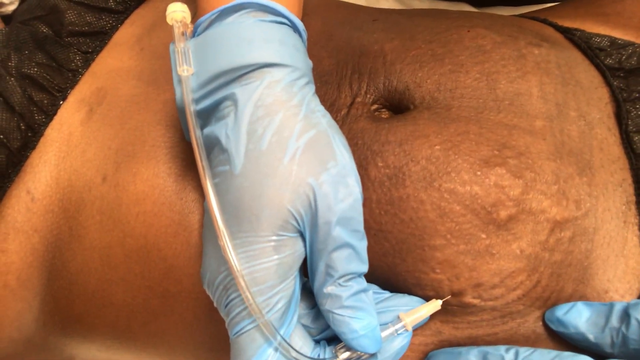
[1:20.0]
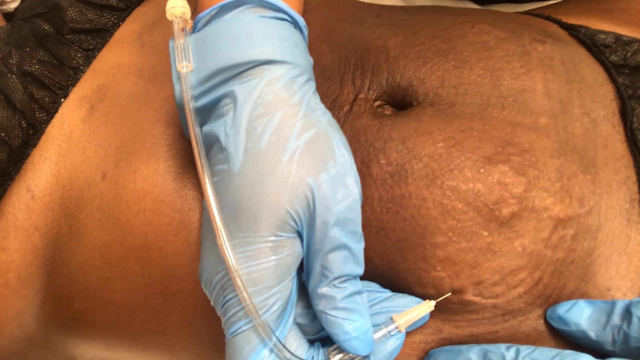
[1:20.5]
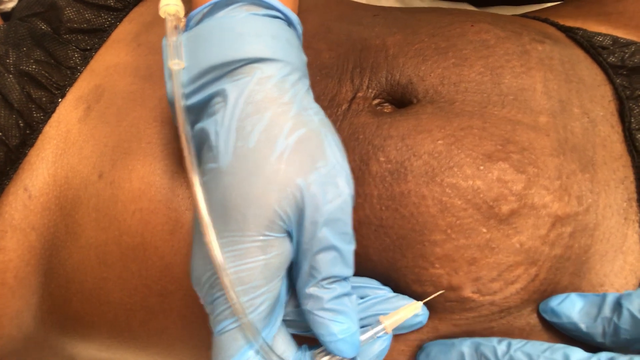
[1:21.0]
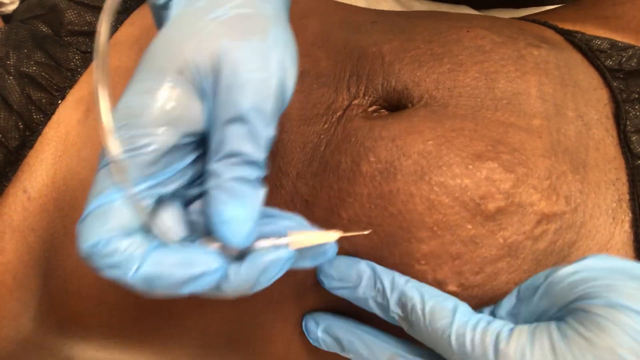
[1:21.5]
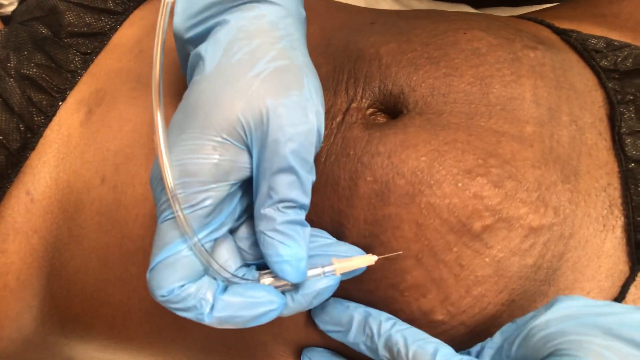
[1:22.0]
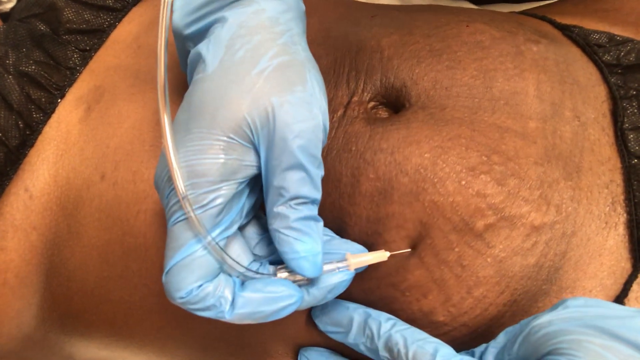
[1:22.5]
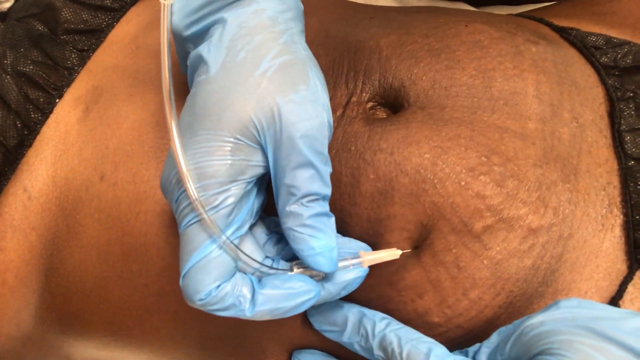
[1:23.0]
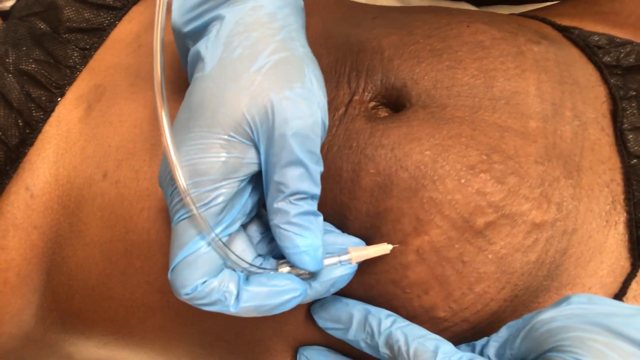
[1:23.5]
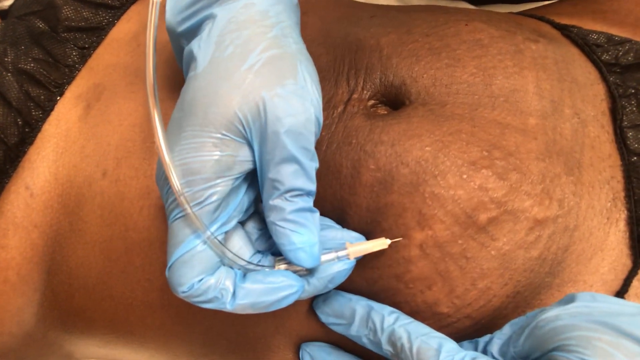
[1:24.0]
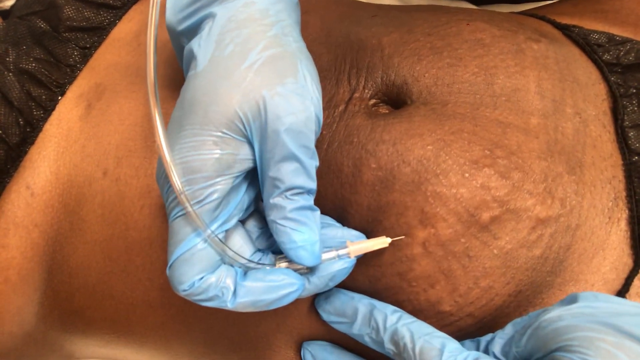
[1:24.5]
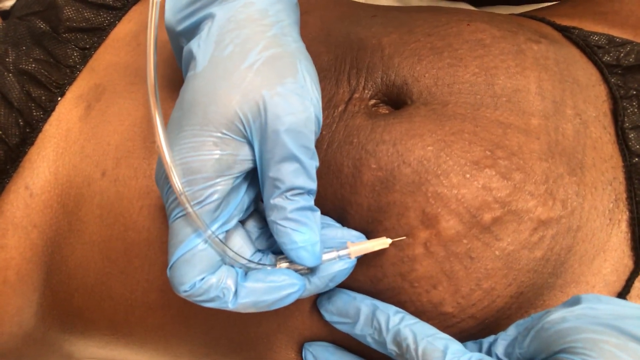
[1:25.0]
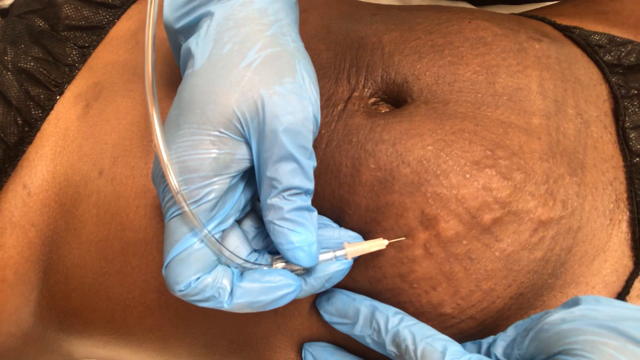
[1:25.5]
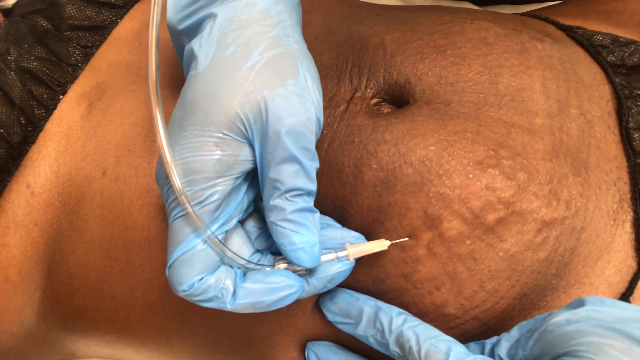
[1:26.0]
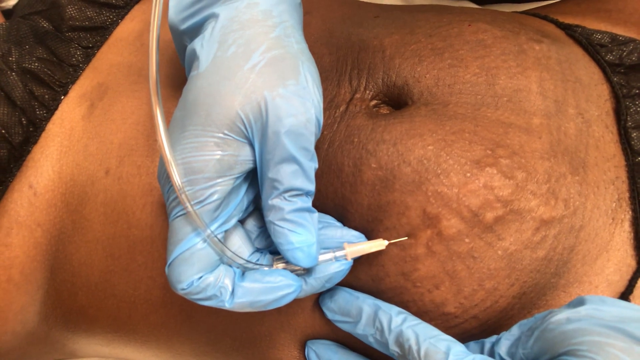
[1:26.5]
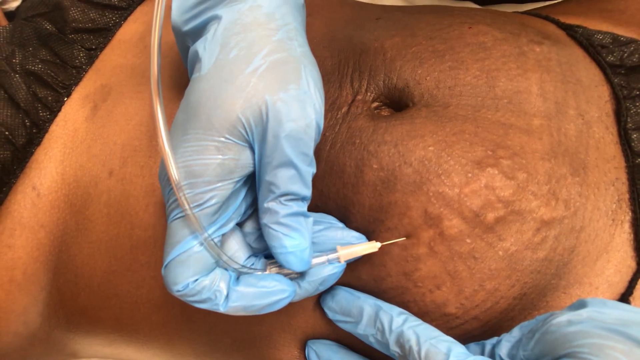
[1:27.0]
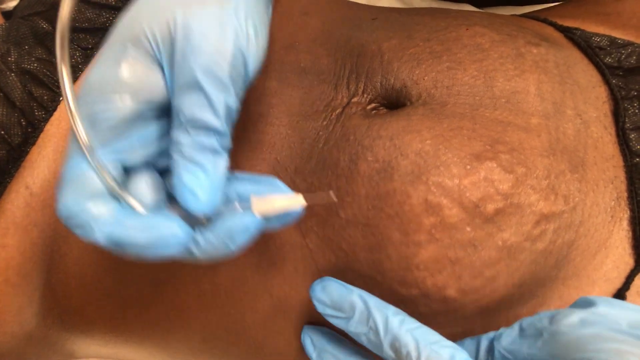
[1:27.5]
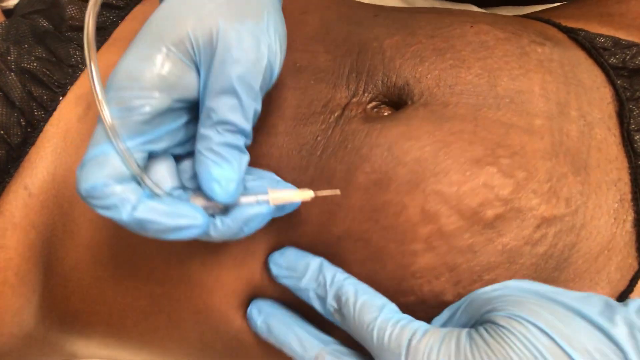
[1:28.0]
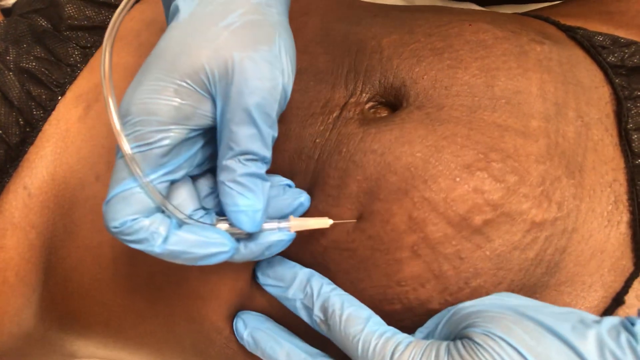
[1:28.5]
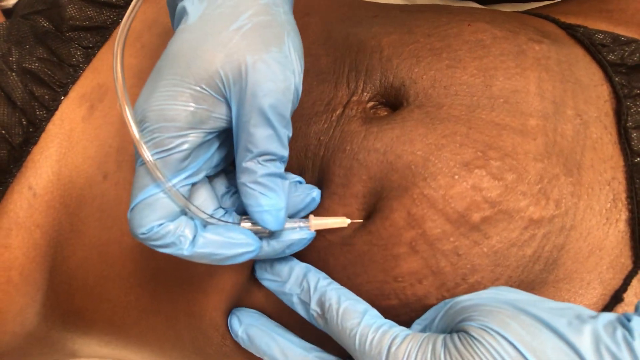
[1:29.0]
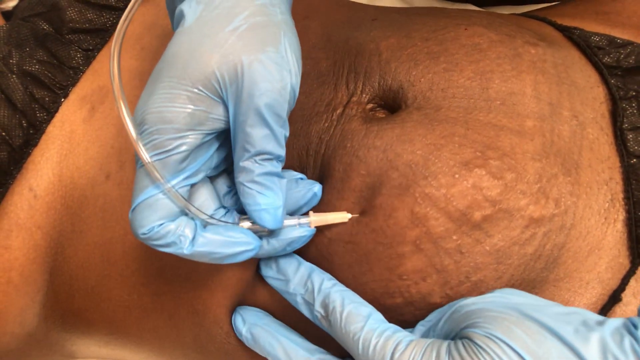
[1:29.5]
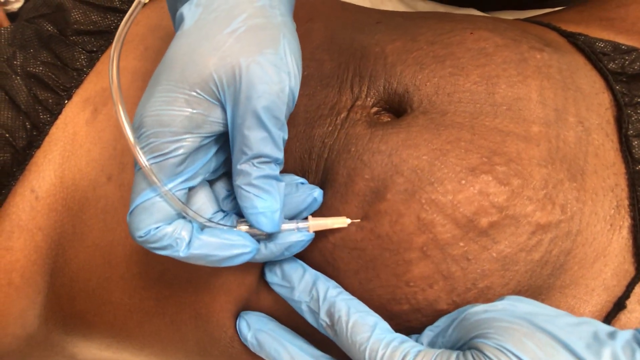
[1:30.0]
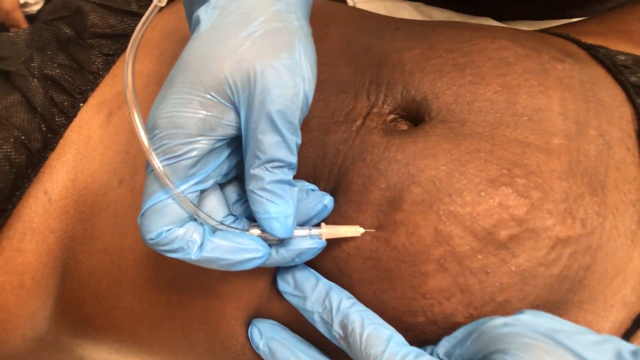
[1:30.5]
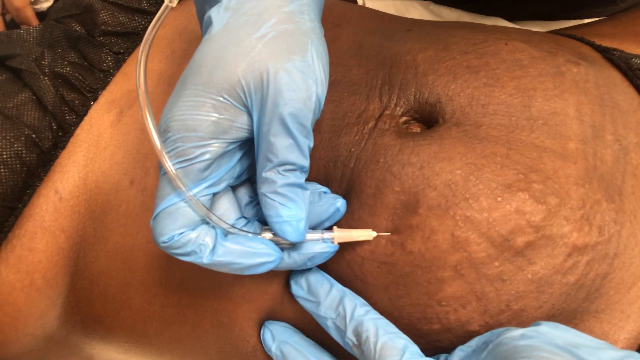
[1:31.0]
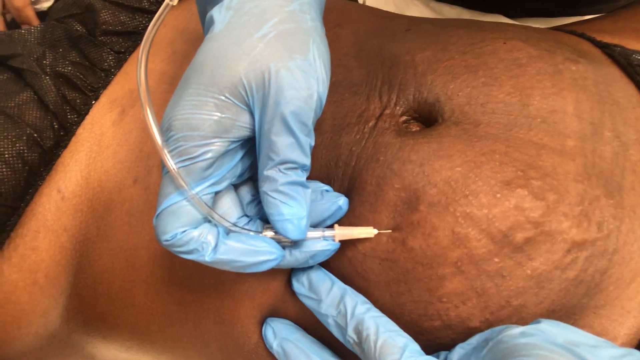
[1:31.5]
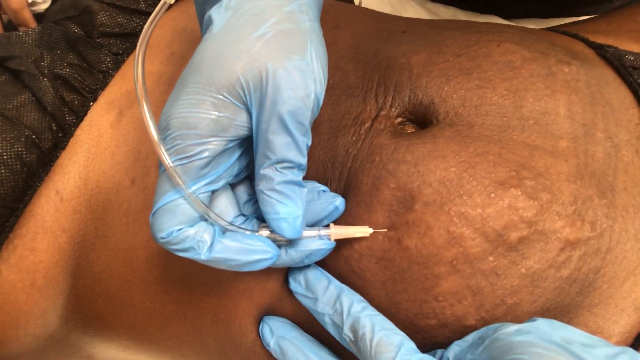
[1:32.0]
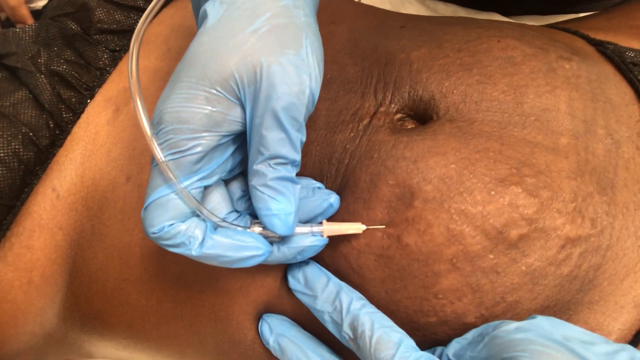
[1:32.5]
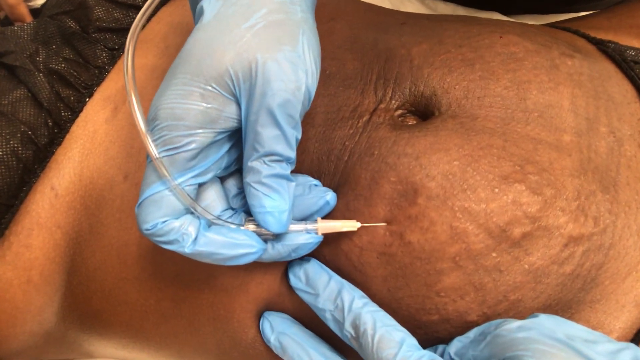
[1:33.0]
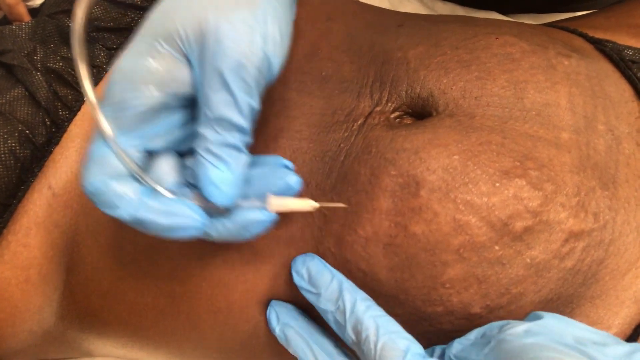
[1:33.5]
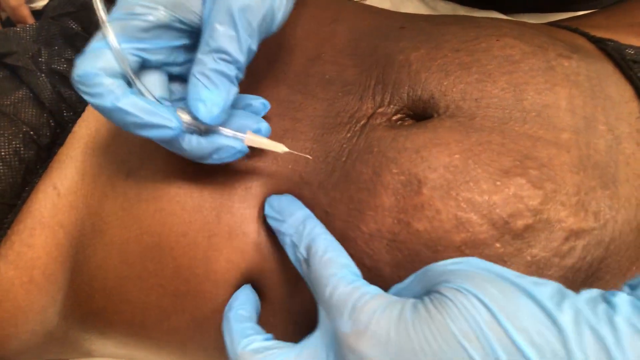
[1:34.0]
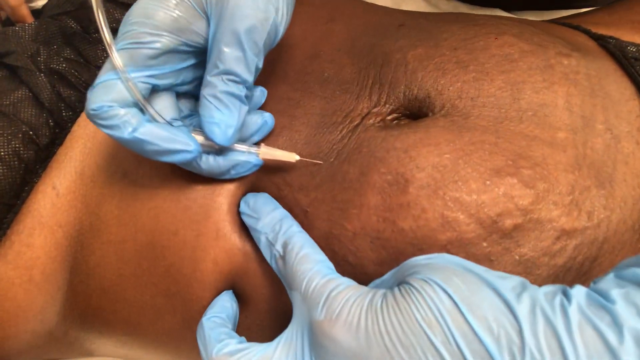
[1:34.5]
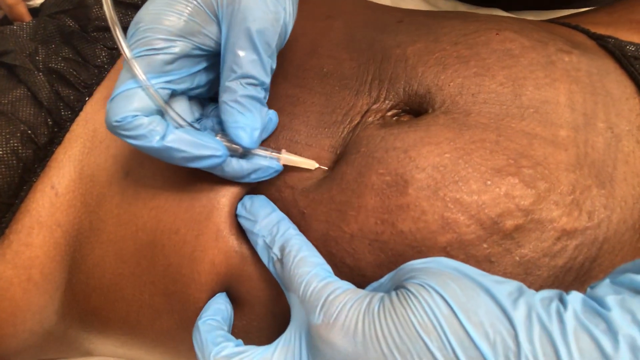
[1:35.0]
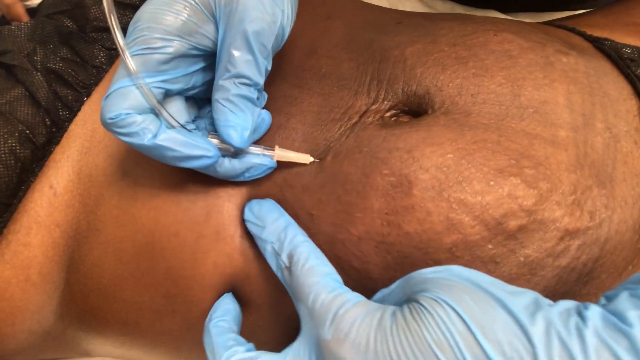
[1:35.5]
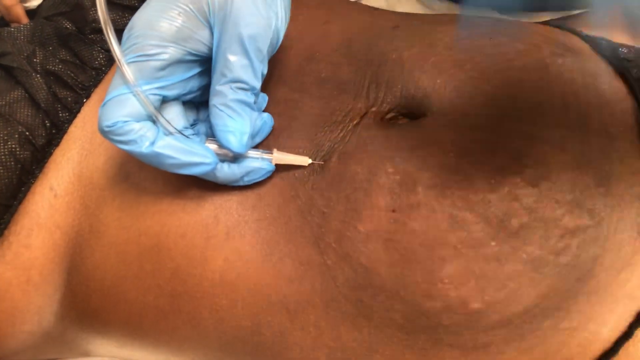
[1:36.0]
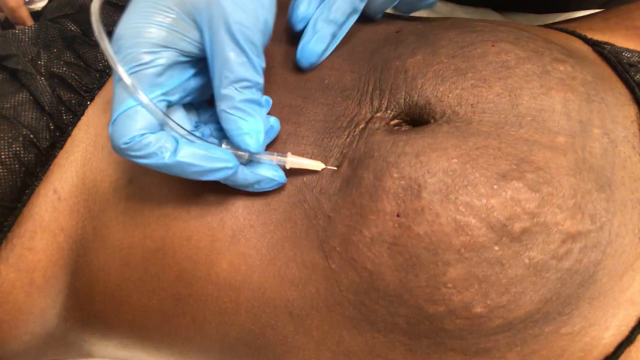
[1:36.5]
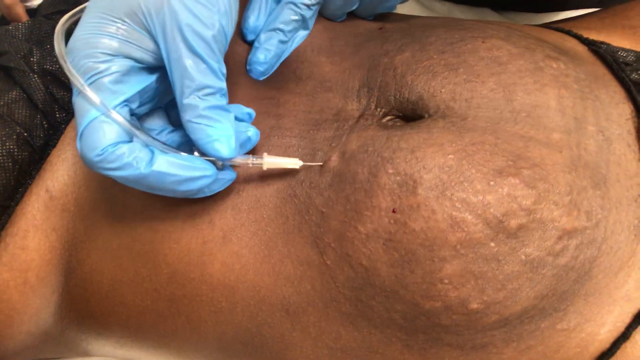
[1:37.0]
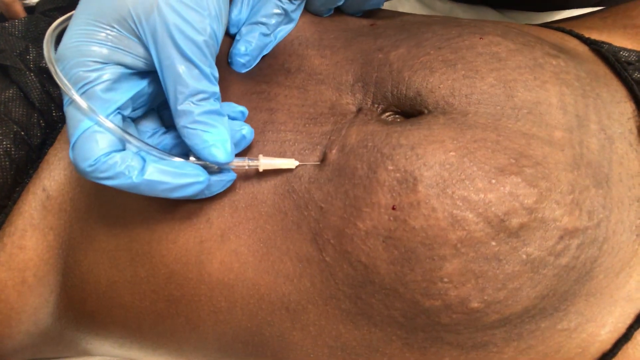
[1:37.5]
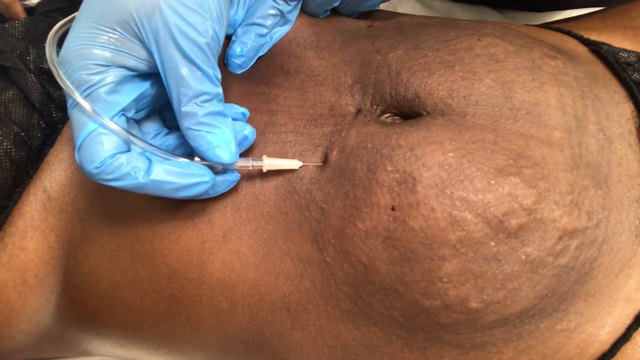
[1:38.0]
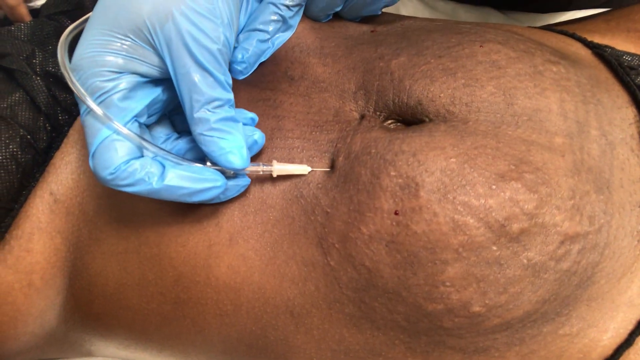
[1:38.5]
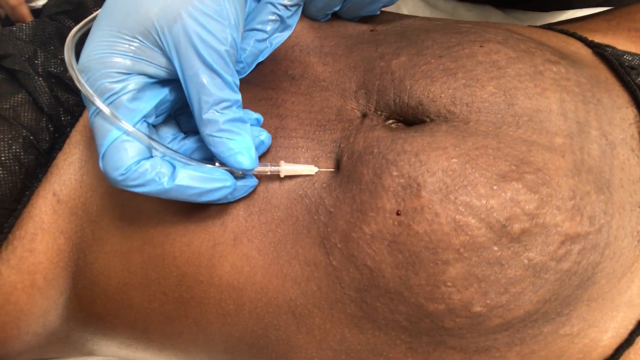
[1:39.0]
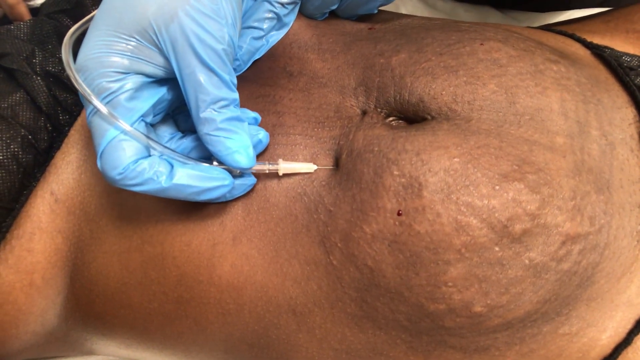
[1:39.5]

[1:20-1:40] The person in blue latex gloves continues to reach across the scene so that the needle is at the bottom of the visible area as they stick the patient with the needle and attached tube. Because they have reached over the body, the end of the tube is visible: it contains a small glass tube where the flexible plastic tube connects to what seems to be a more hardline one. They inject the body several more times, and sections of wrinkled skin appear to become less wrinkled. The tube is clear, so it is uncertain whether something is injected or removed, but it seems that maybe a clear liquid is being injected to reduce the appearance of wrinkles. The doctor moves around the body in a roughly clockwise arc toward the belly button, injecting several times along the way.